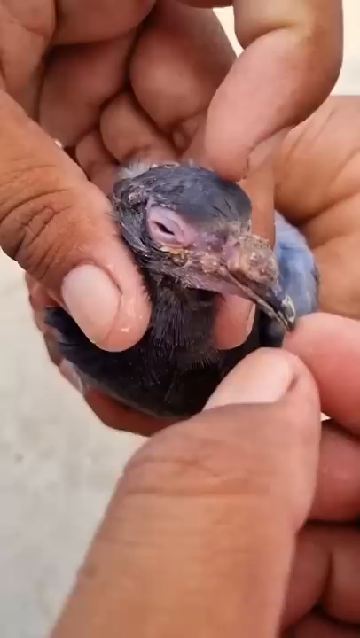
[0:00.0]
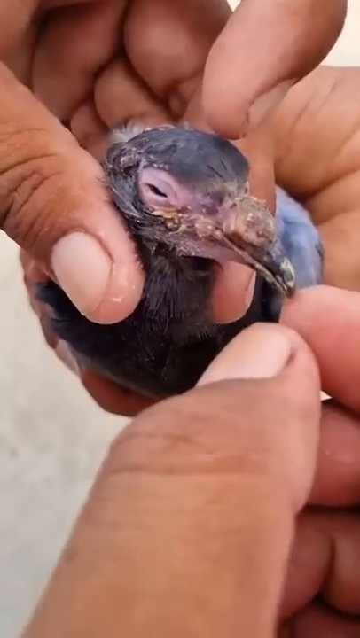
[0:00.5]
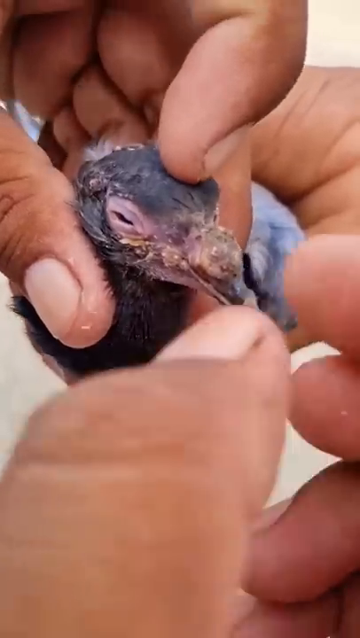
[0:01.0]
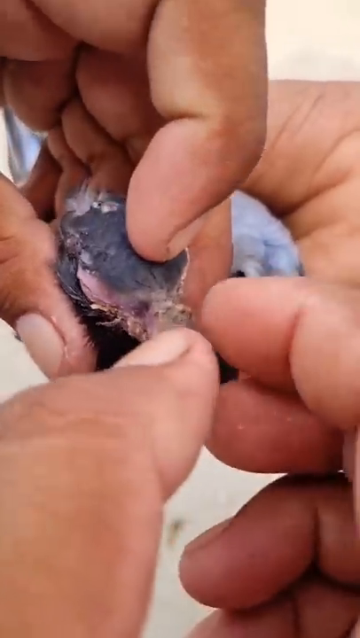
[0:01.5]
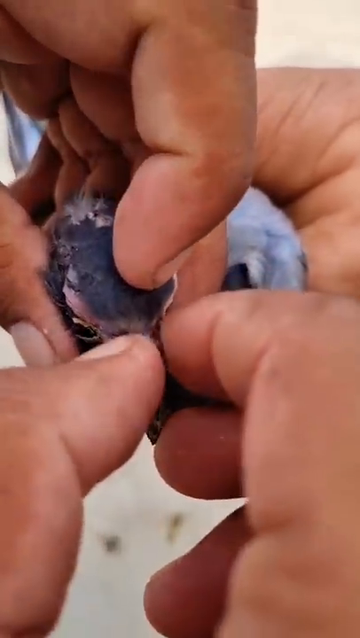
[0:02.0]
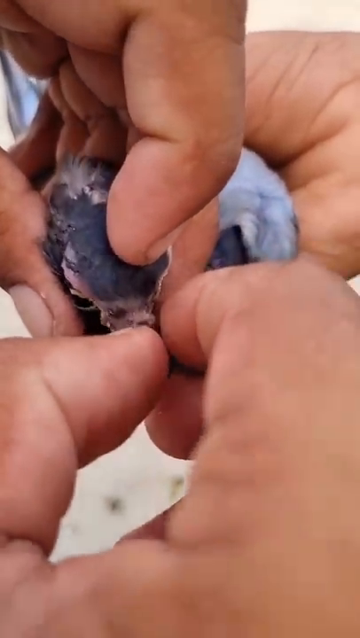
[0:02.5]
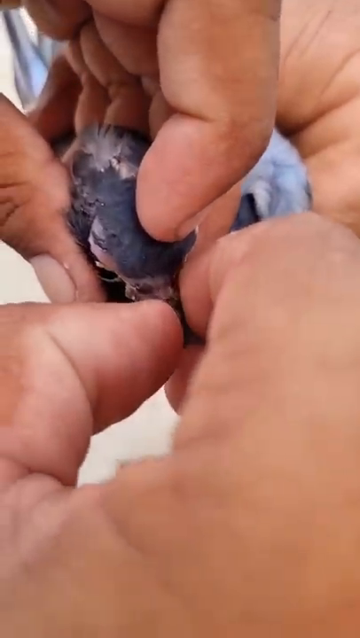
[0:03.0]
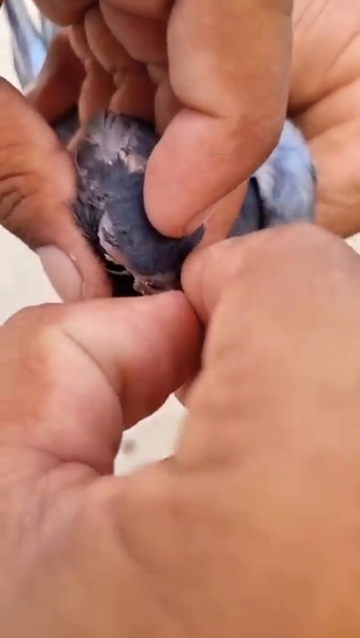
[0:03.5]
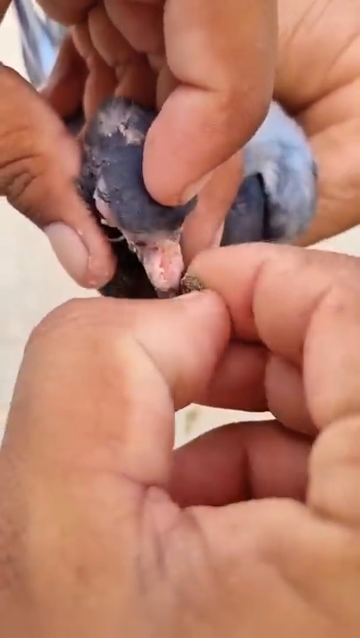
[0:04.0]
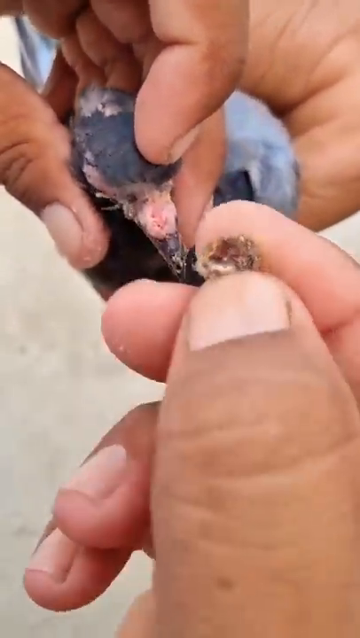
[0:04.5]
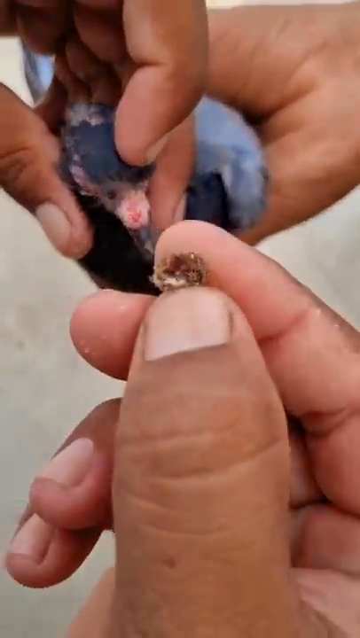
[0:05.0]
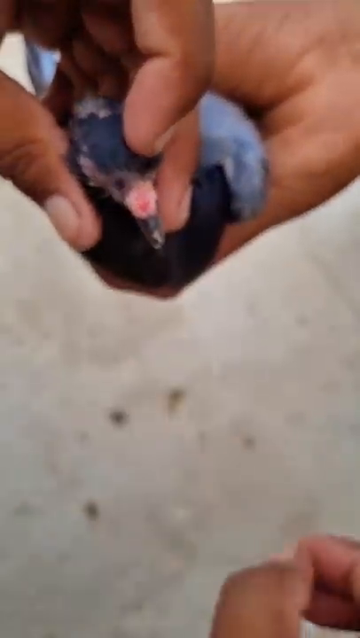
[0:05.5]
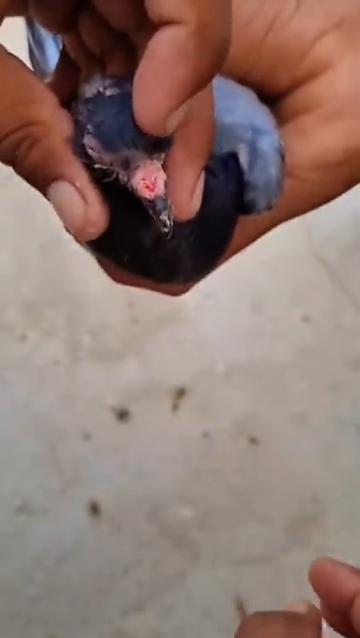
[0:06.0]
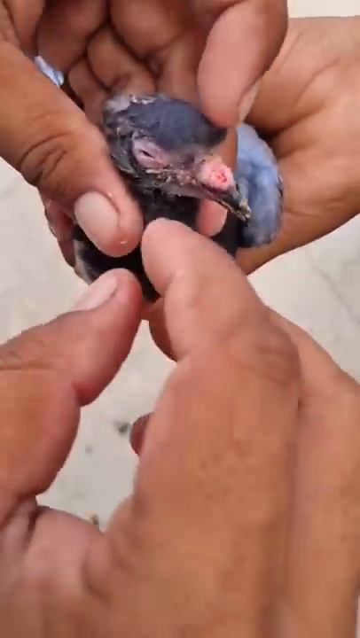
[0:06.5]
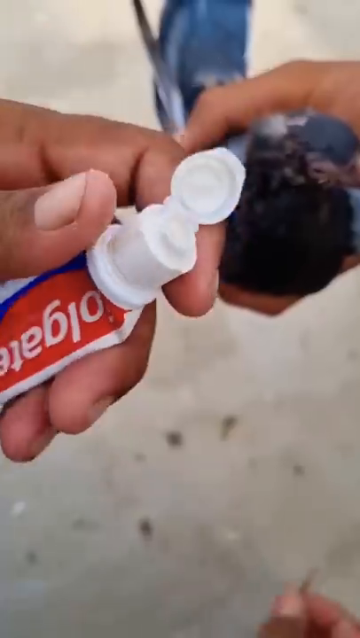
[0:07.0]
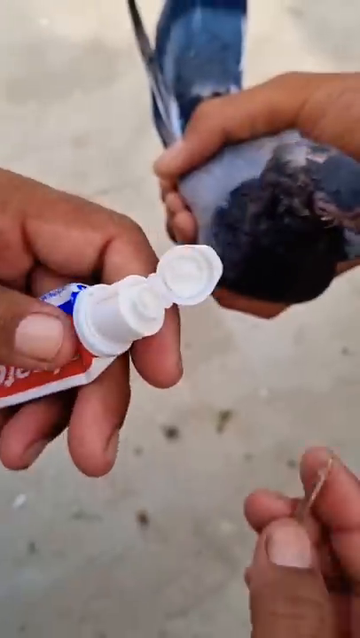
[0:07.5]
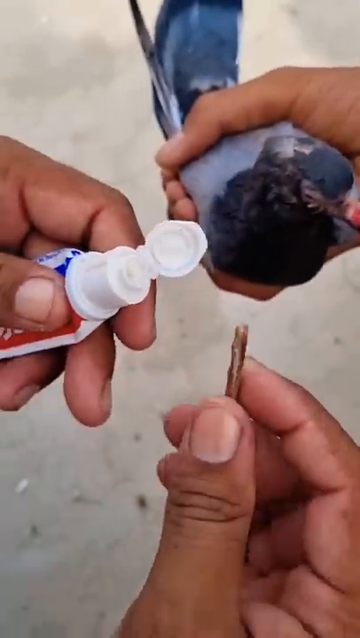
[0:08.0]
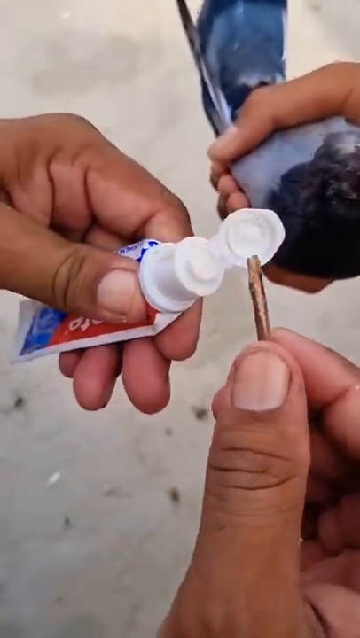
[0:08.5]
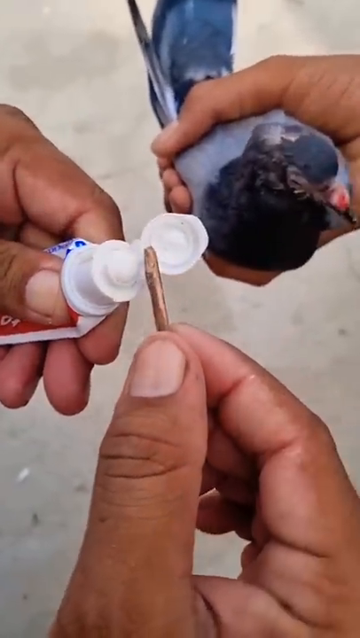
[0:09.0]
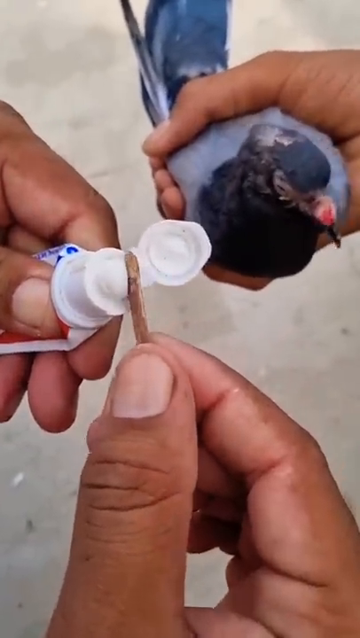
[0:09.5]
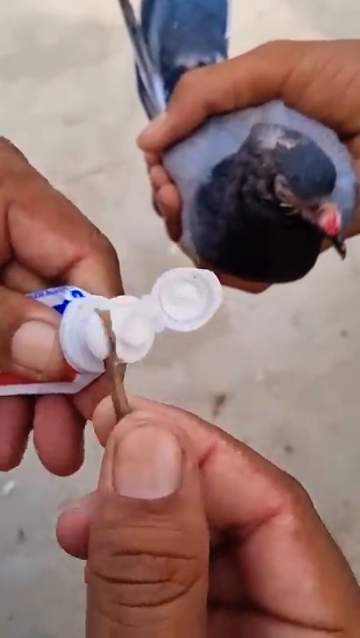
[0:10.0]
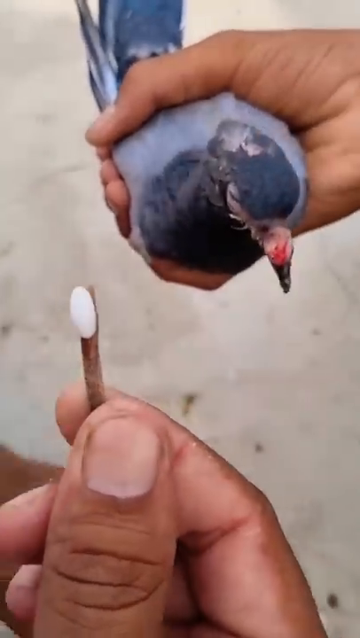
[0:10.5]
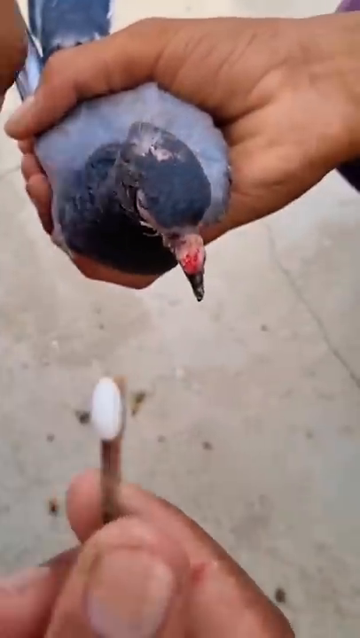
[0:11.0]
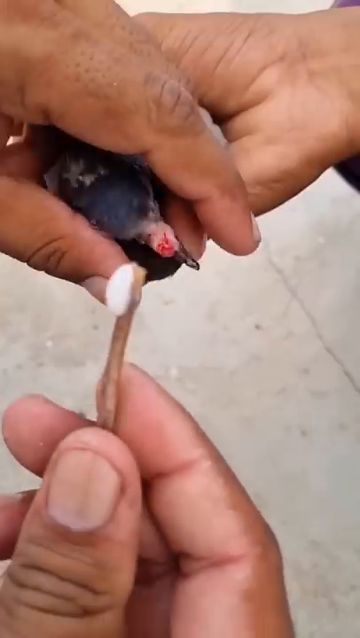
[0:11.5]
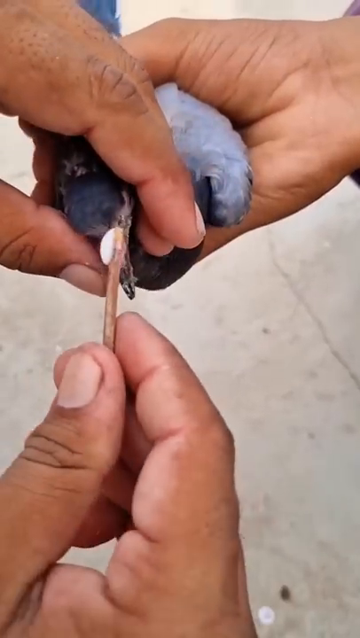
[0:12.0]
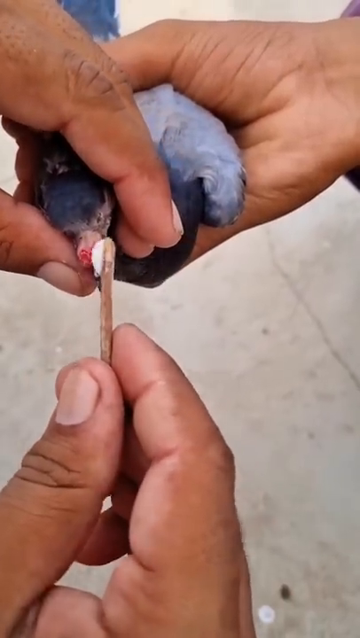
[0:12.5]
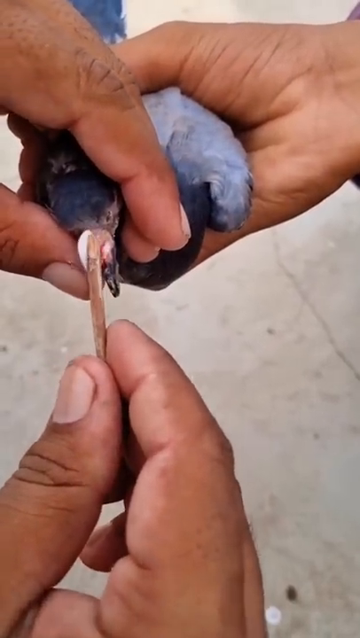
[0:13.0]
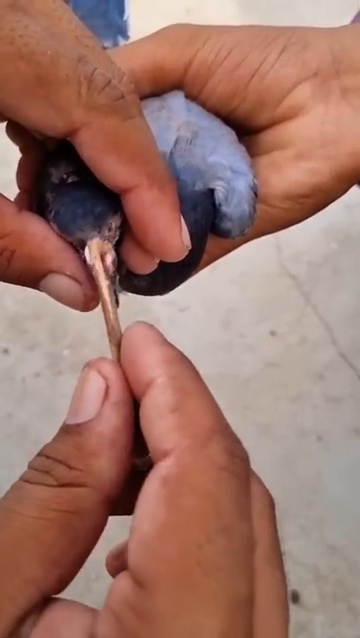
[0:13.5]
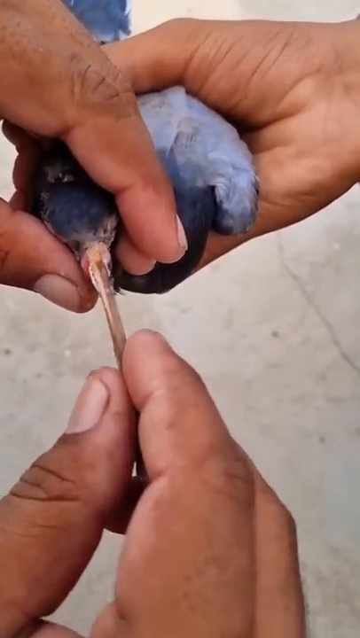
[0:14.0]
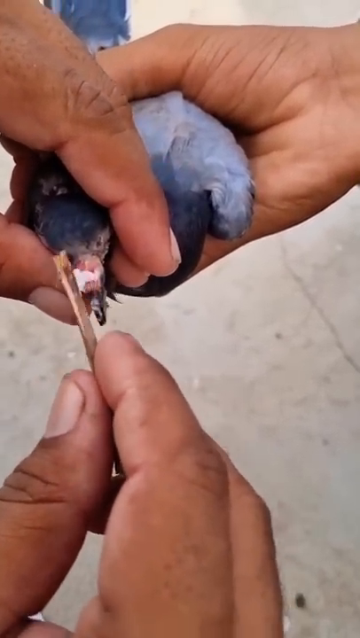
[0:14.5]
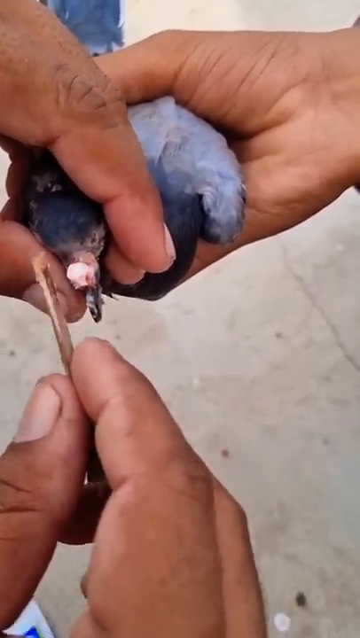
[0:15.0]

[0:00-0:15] A pigeon has an injury to its beak. A person tries to help it, peeling the scab off and then applying a medication, possibly cortisone, to the pigeon.